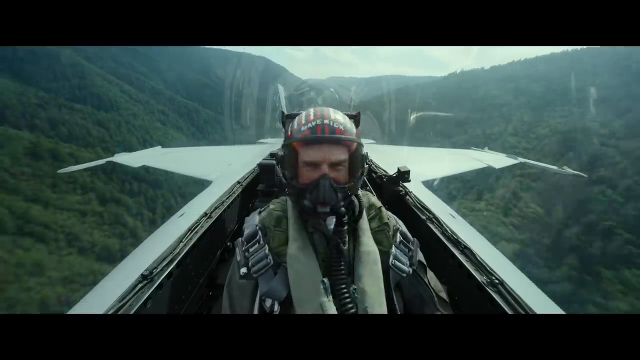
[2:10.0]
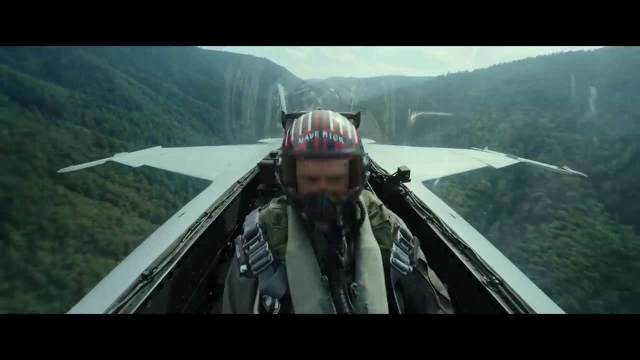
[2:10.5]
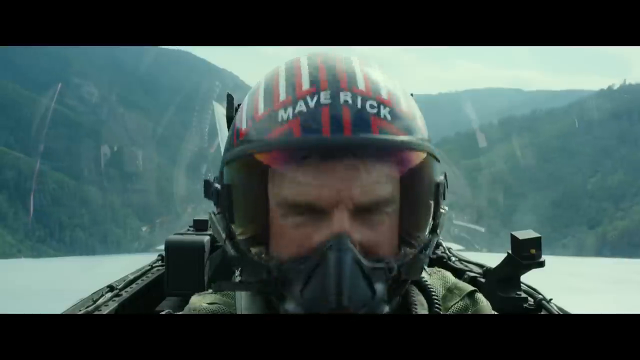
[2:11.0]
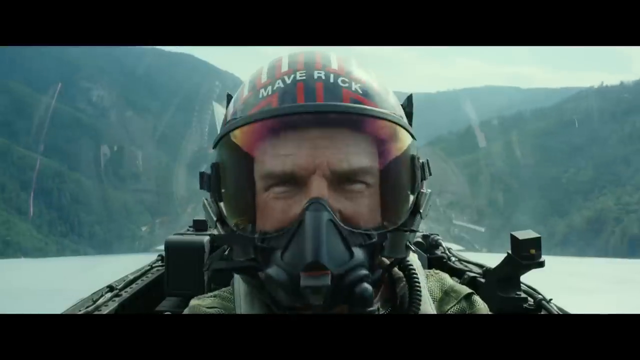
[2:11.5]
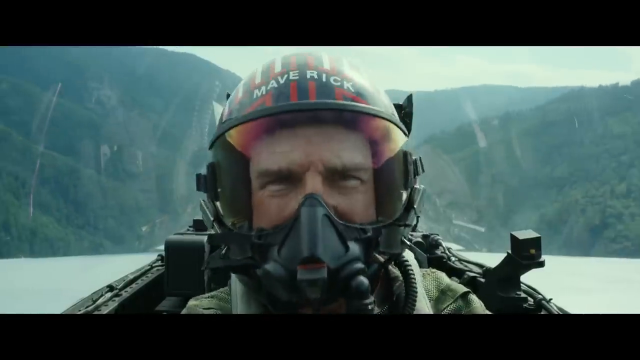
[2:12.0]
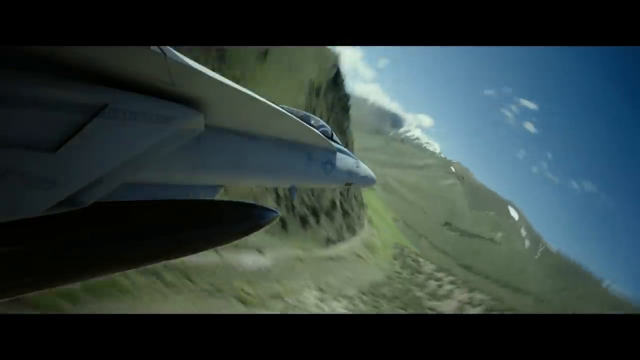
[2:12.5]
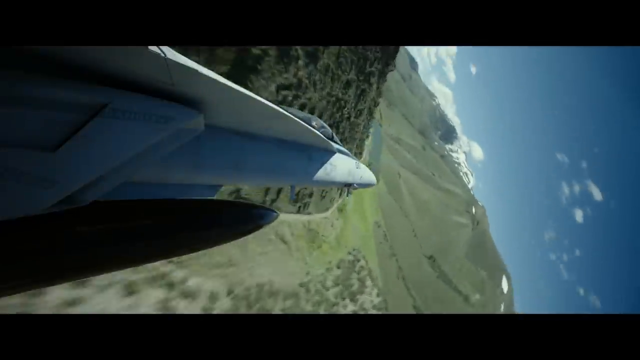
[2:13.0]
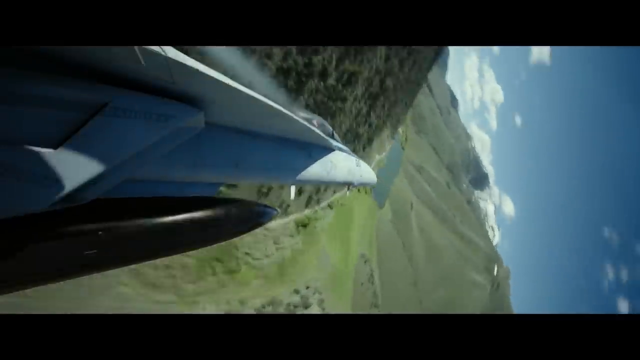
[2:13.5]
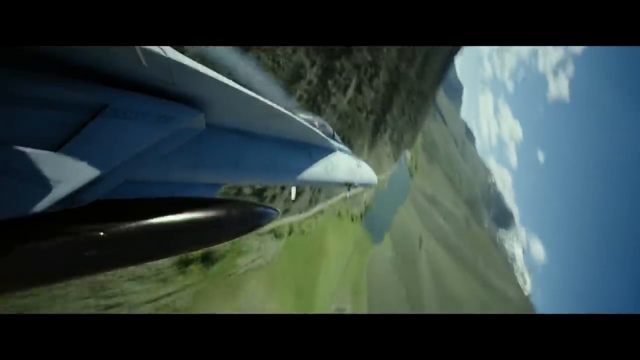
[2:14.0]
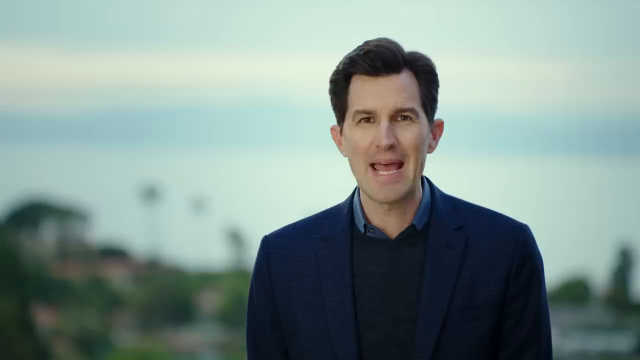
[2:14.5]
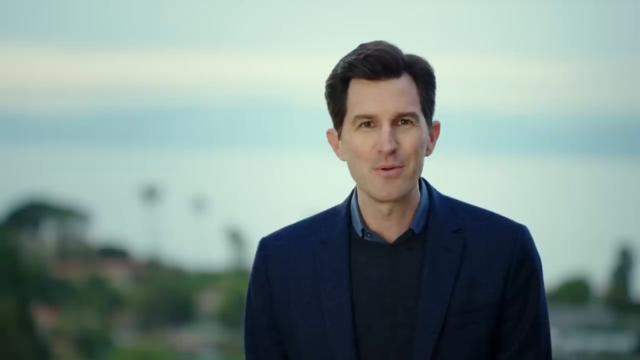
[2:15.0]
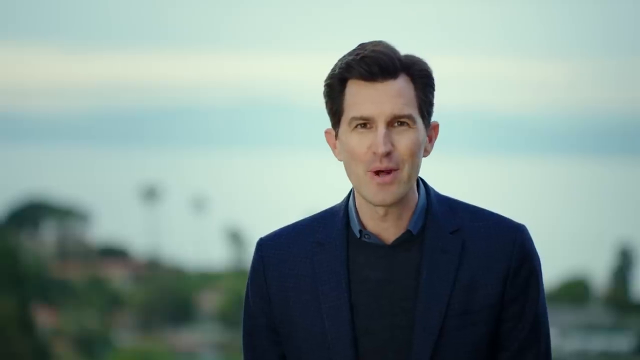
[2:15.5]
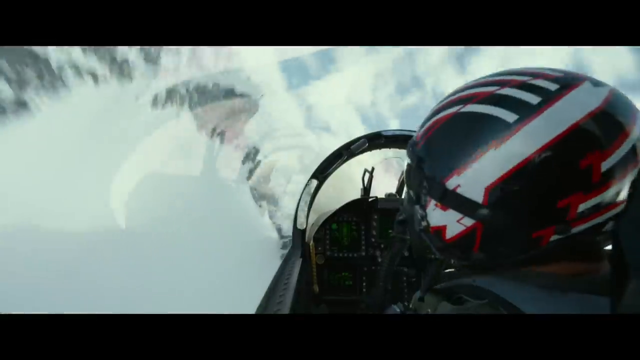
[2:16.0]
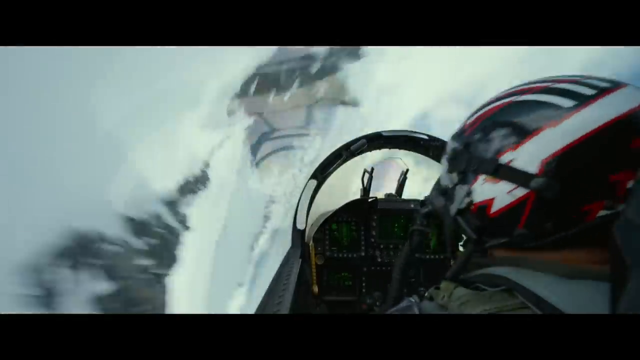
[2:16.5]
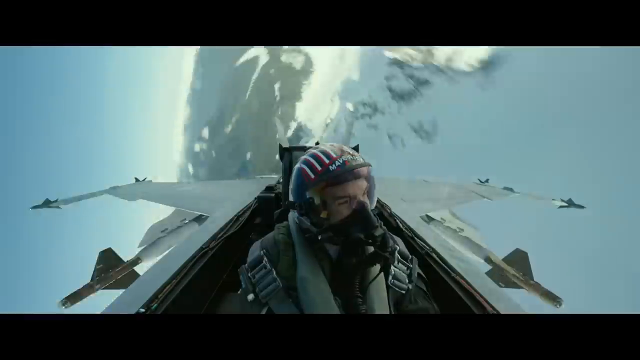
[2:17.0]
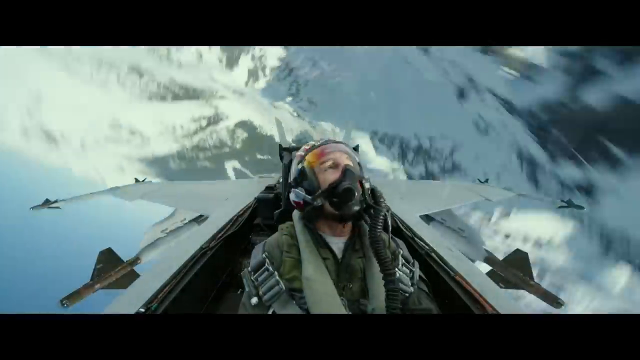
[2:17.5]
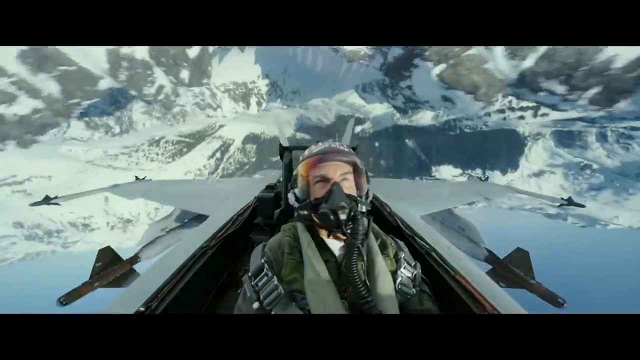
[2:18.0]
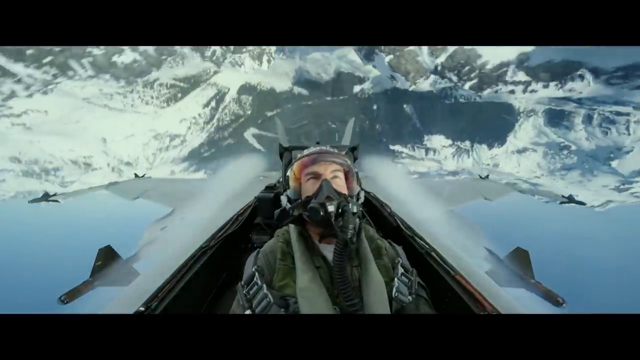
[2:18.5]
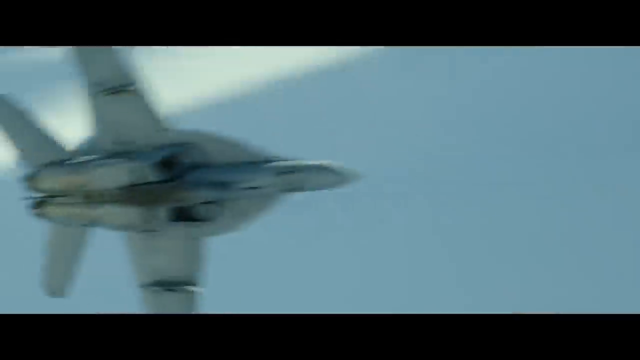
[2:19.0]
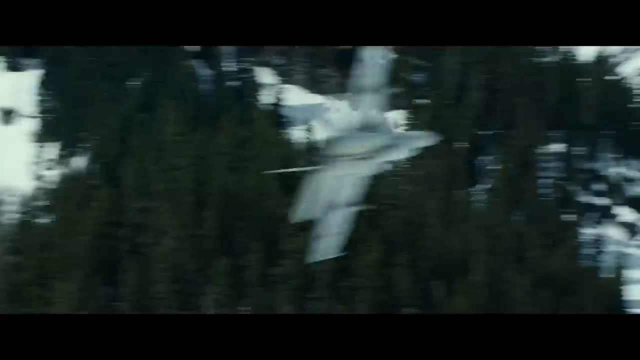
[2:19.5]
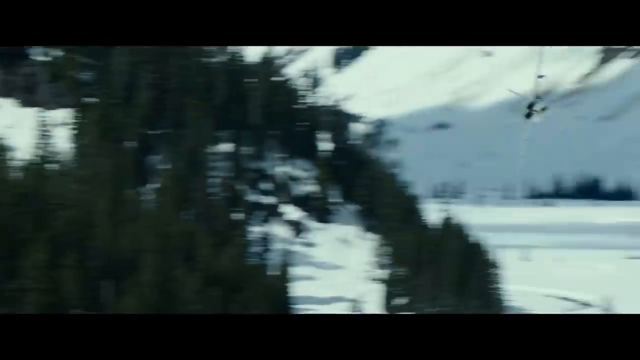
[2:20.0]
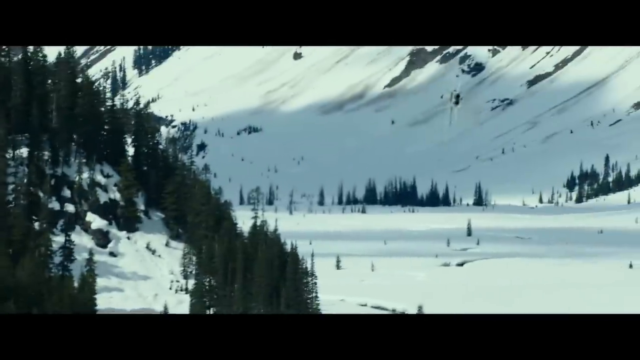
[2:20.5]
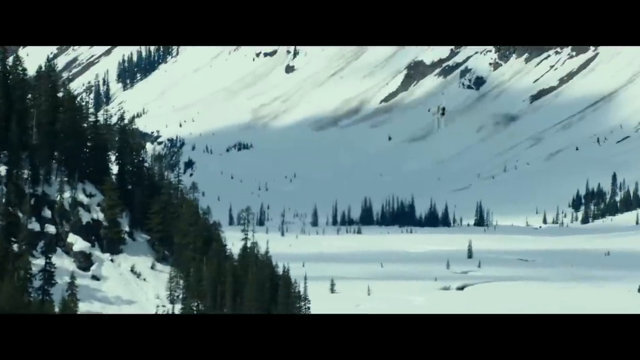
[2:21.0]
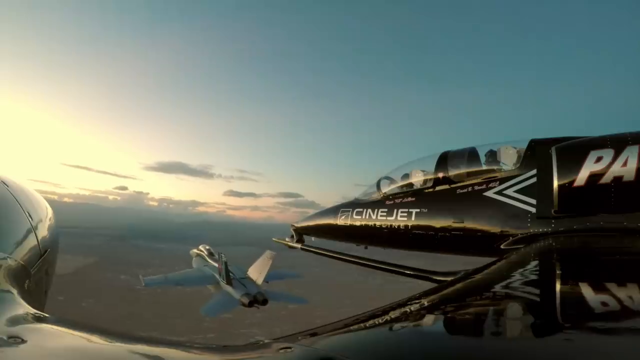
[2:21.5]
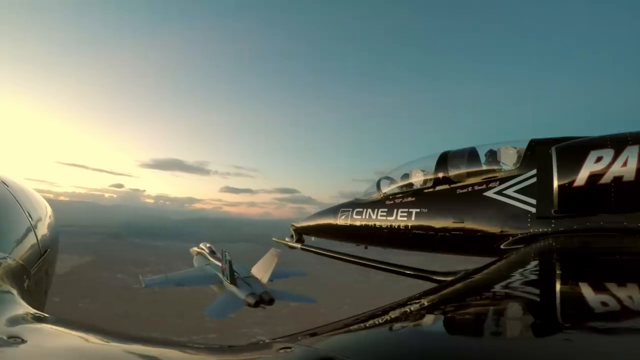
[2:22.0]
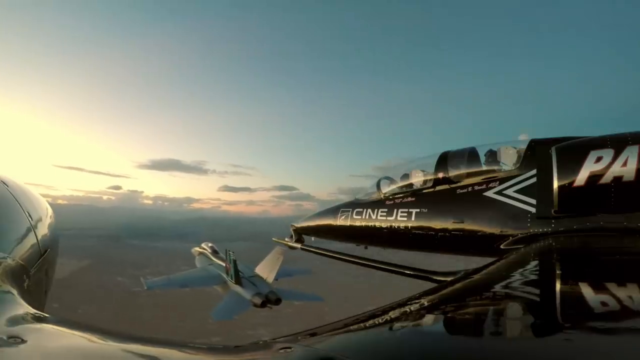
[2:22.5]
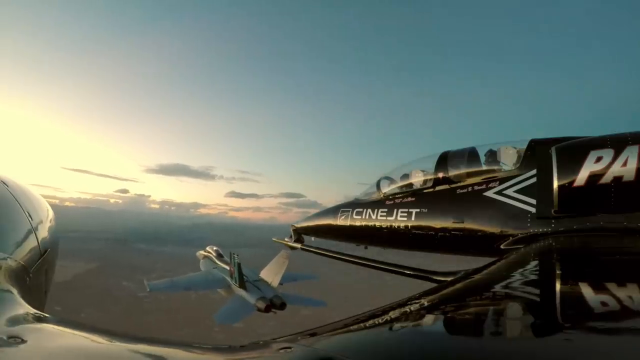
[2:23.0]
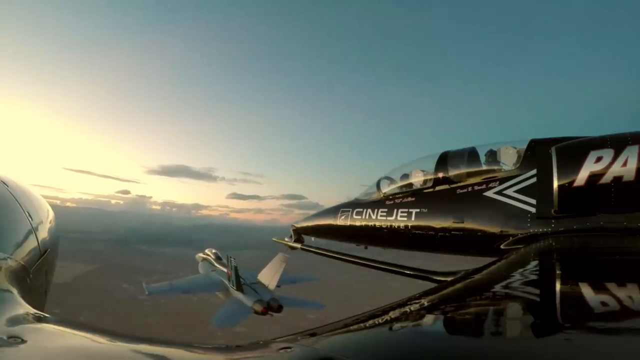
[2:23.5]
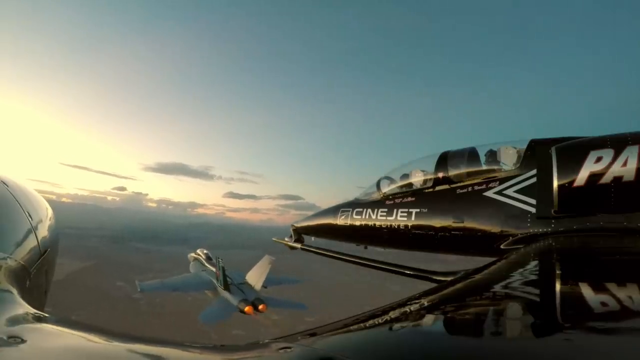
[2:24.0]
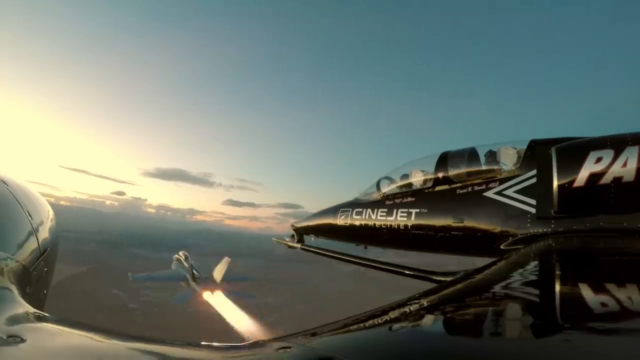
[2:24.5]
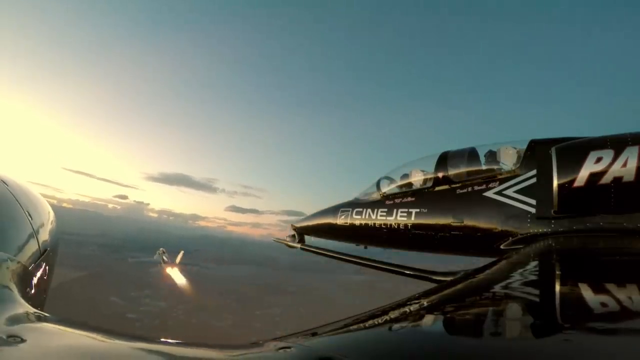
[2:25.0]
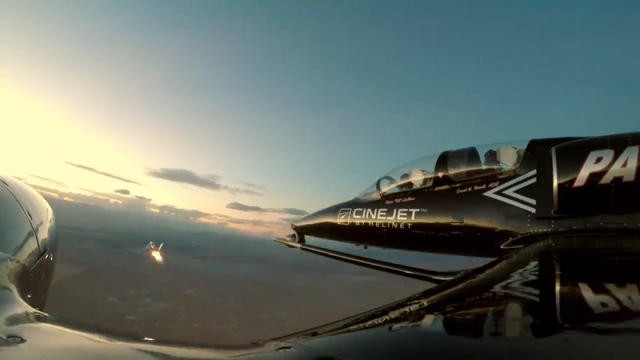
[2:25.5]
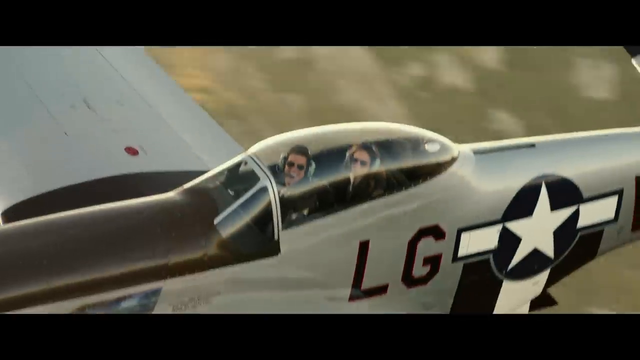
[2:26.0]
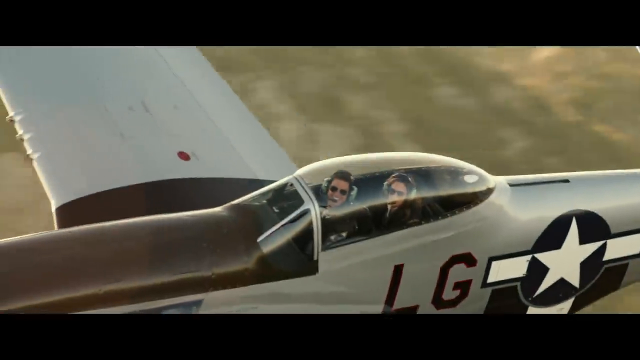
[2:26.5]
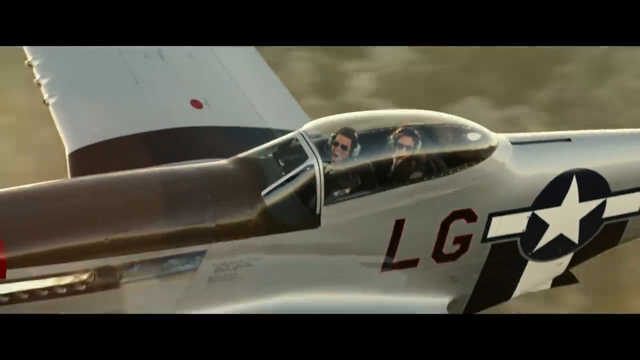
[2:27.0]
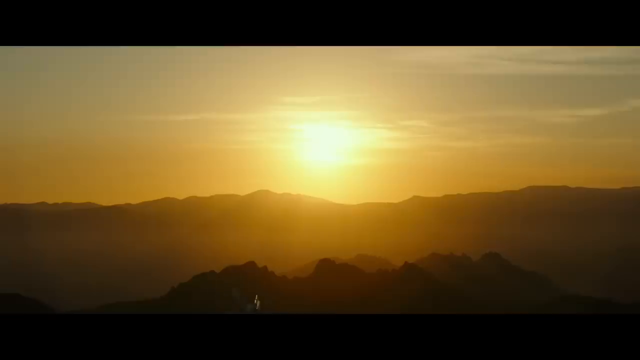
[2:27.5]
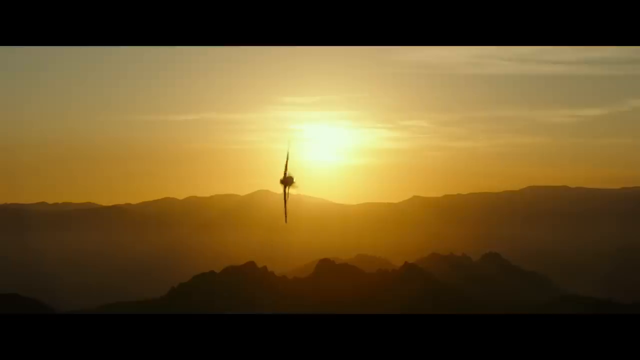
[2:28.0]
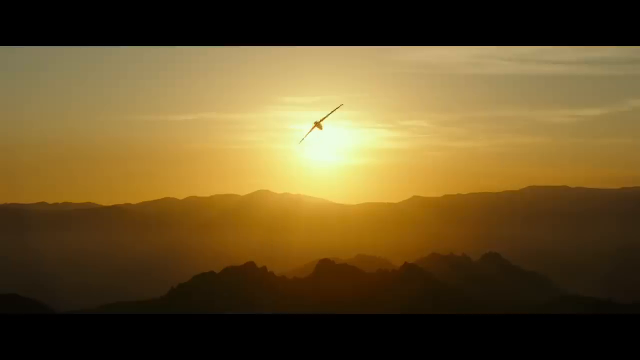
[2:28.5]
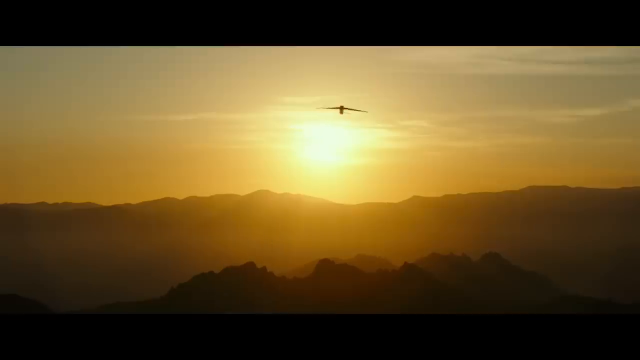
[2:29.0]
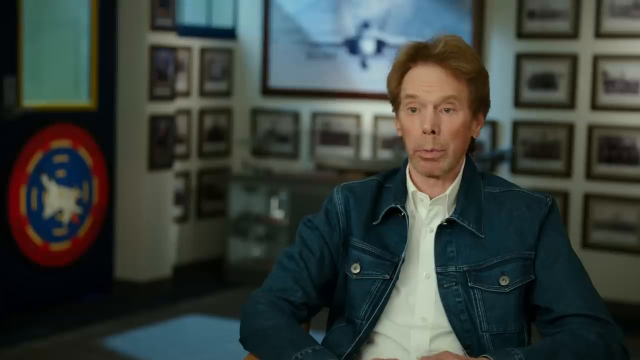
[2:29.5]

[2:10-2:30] Many people enjoy a show about Maverick, with "2020" shown. The people appear to be on a big body of water. The man who is the winner looks like he is enjoying himself. Some look like they are suffocating while others are enjoying themselves. Two men and one woman compete against each other. Men wearing yellow seem to direct people which way to go. Three men appear to explain what is going on, apparently in an office or lecture room. The people appear to be in America, with the American flag on their clothes. The competition ends, and one of the competitors wins.